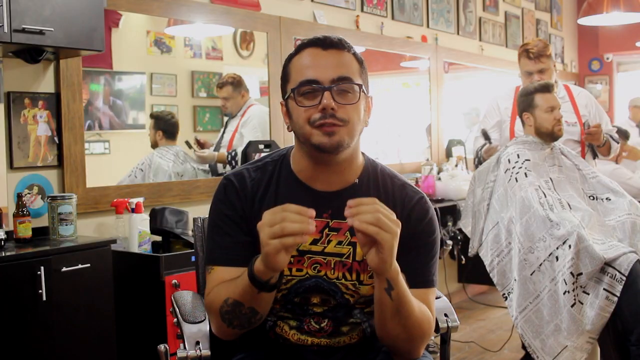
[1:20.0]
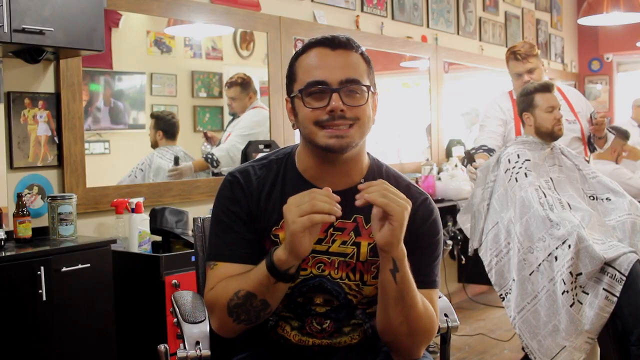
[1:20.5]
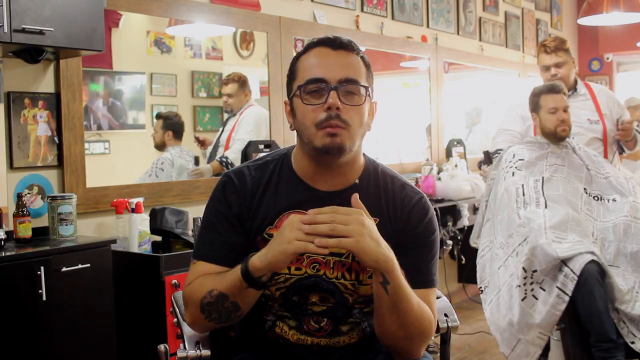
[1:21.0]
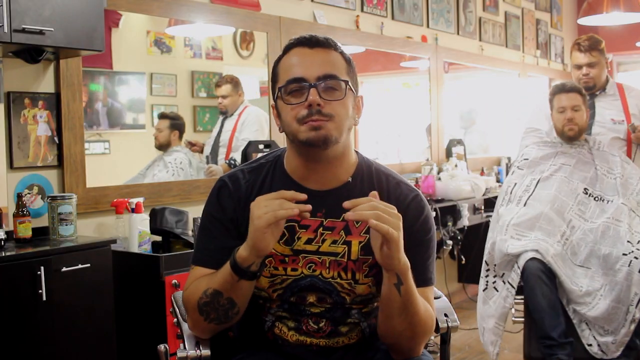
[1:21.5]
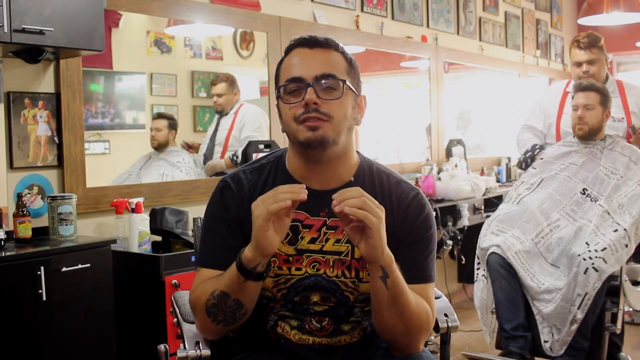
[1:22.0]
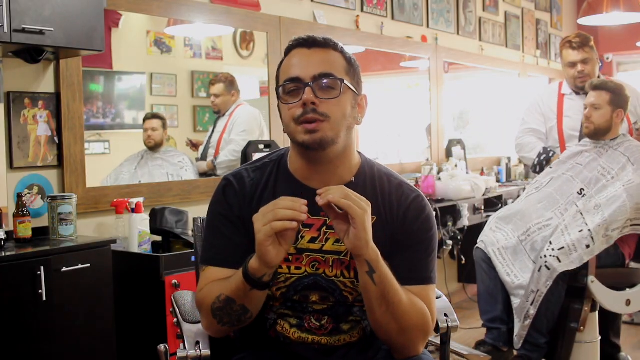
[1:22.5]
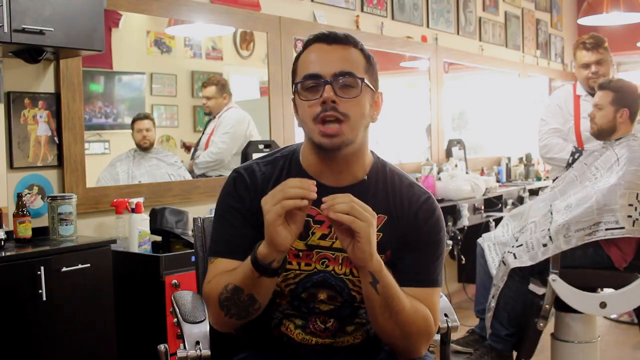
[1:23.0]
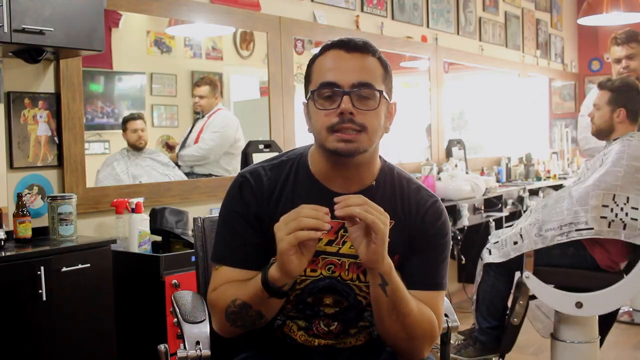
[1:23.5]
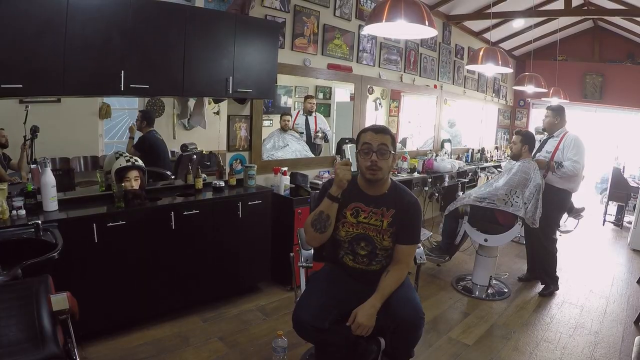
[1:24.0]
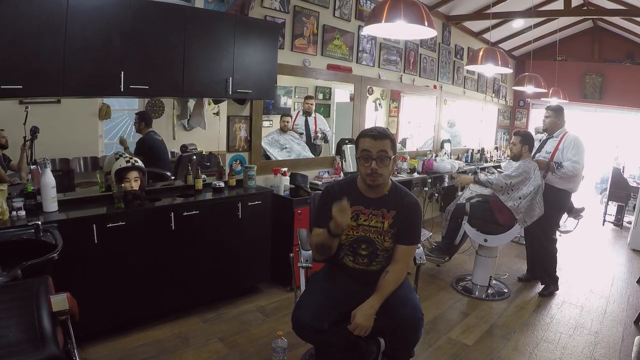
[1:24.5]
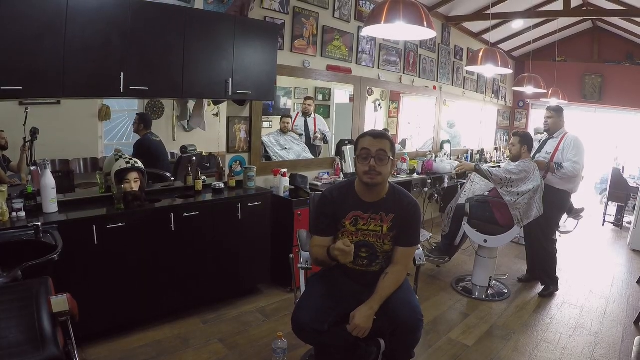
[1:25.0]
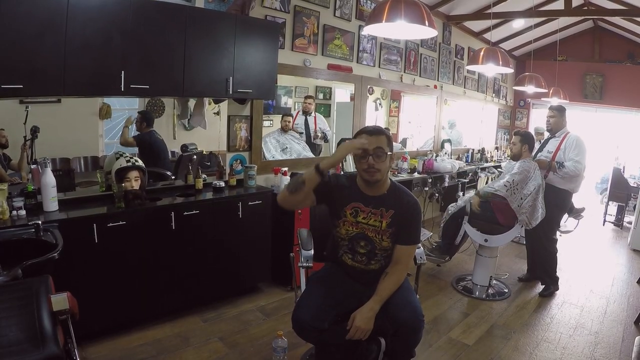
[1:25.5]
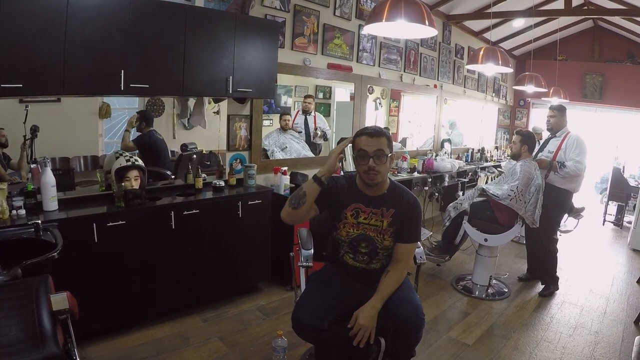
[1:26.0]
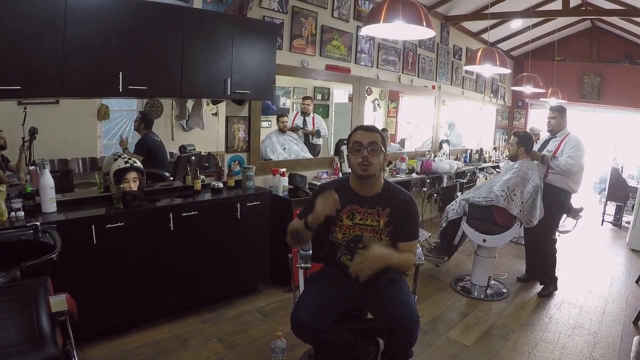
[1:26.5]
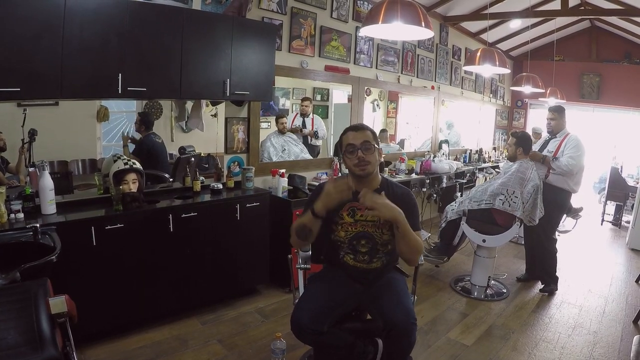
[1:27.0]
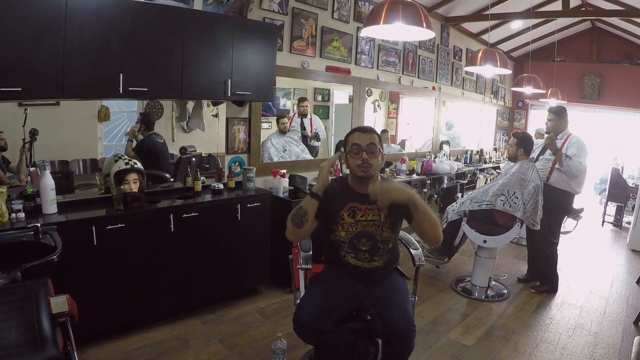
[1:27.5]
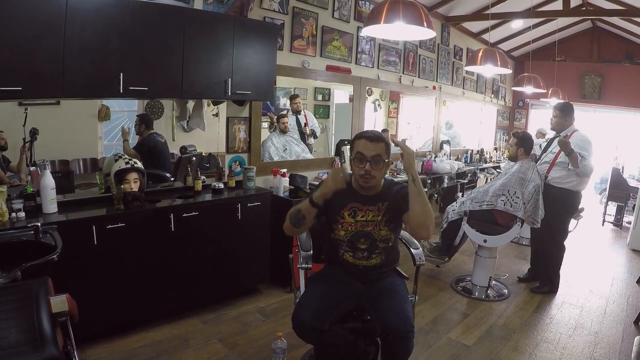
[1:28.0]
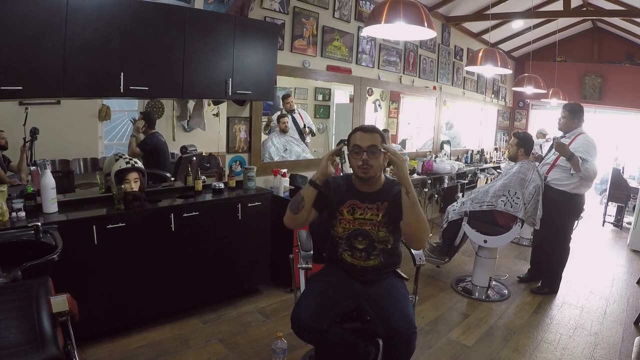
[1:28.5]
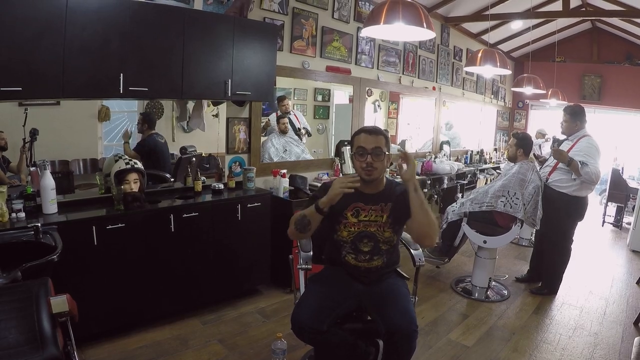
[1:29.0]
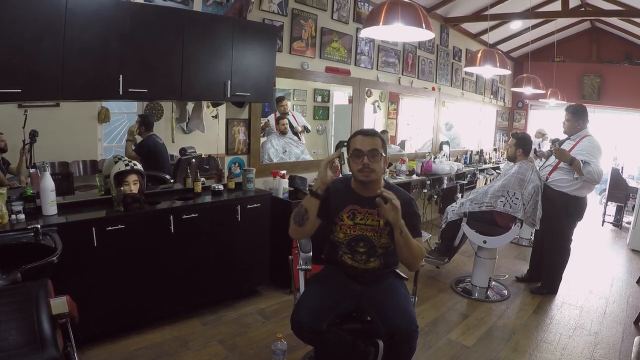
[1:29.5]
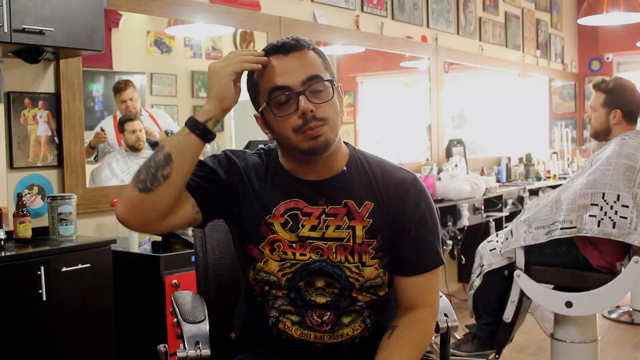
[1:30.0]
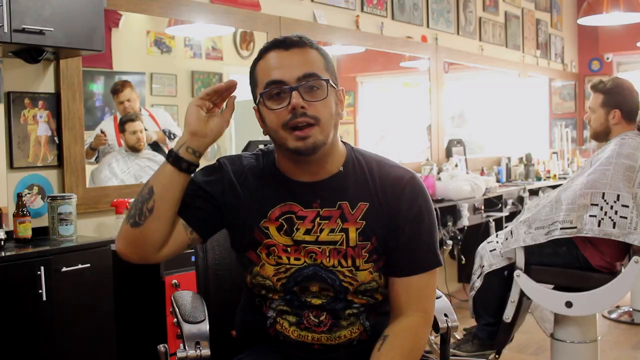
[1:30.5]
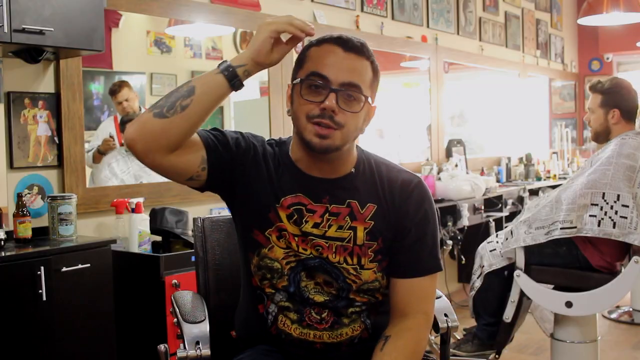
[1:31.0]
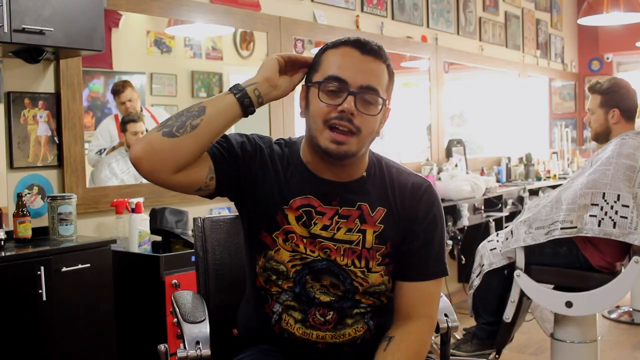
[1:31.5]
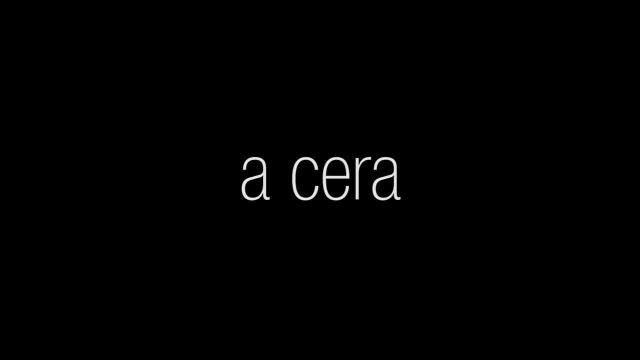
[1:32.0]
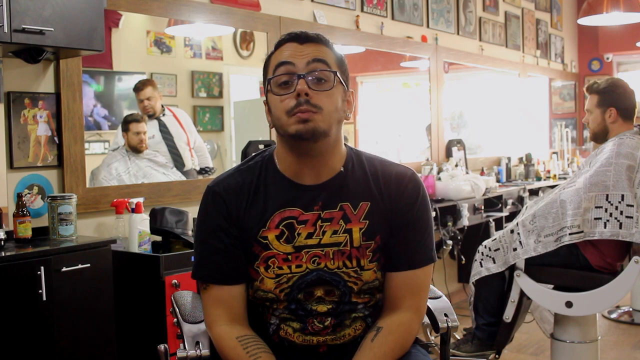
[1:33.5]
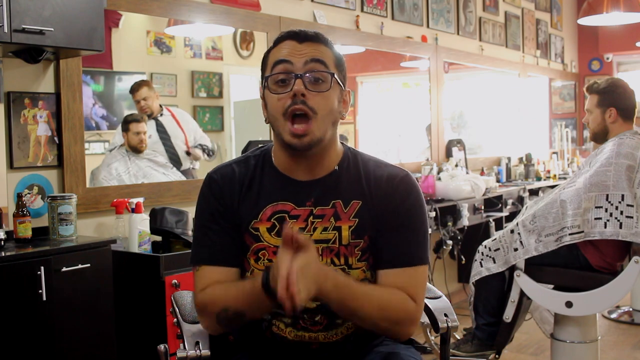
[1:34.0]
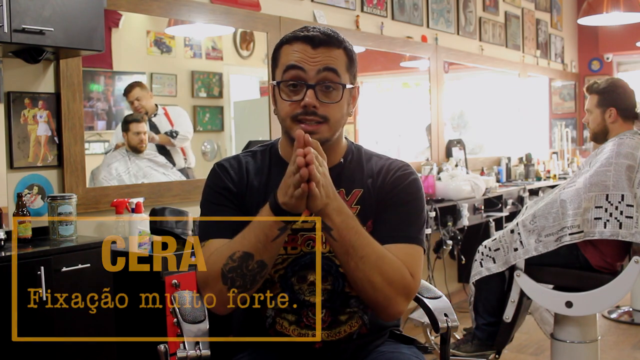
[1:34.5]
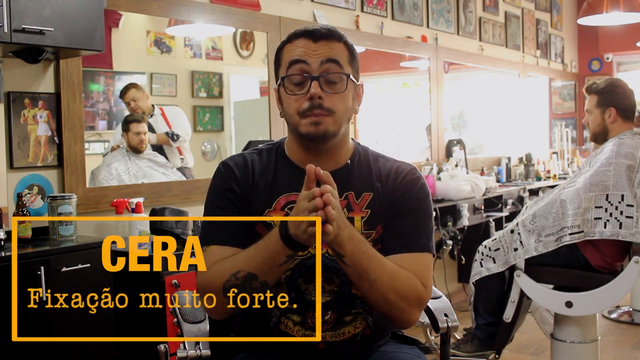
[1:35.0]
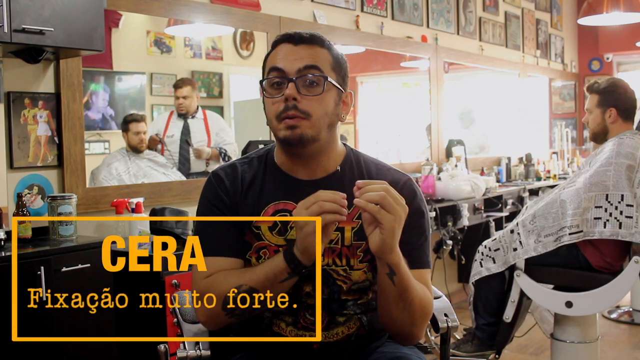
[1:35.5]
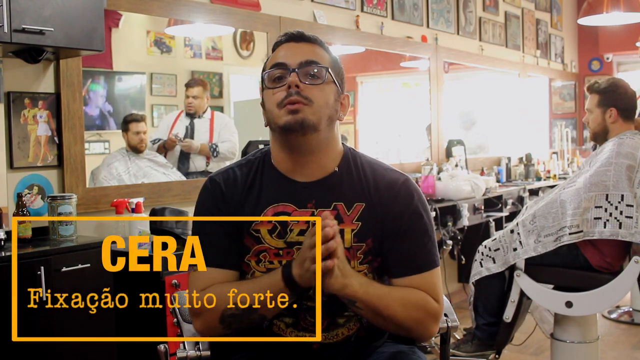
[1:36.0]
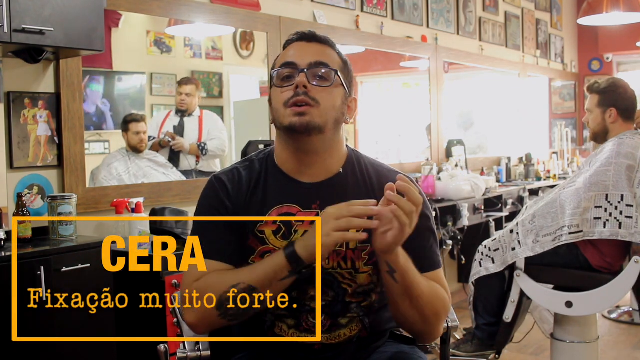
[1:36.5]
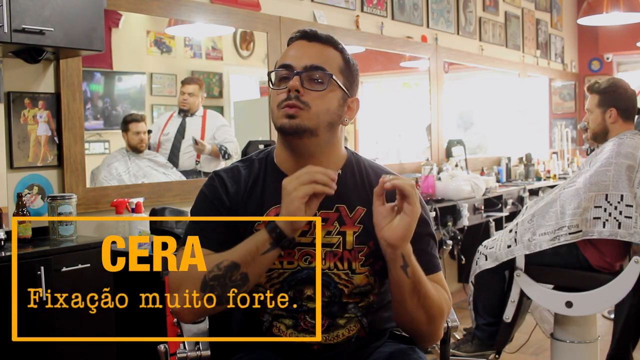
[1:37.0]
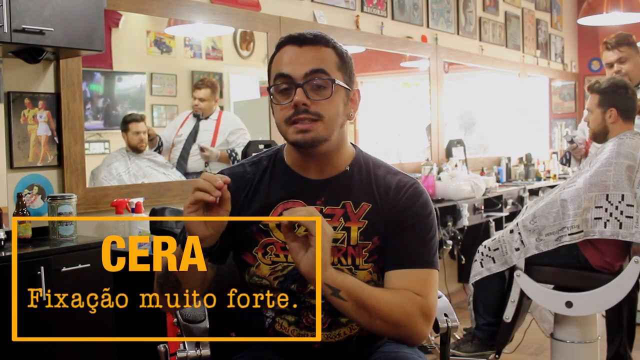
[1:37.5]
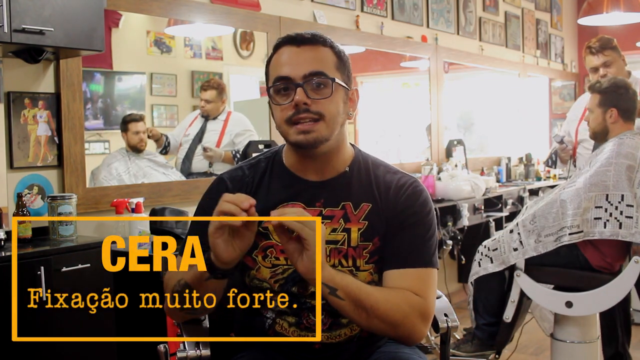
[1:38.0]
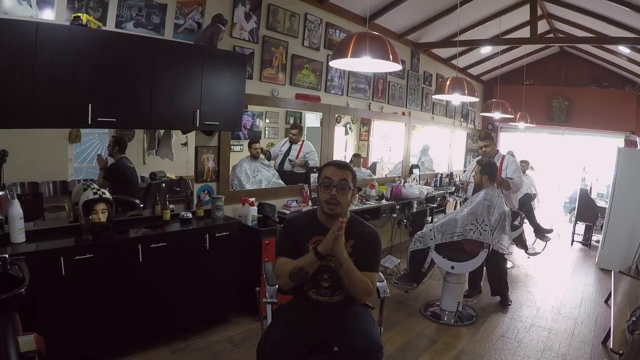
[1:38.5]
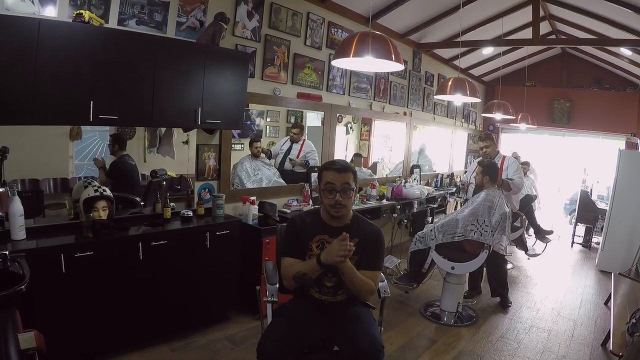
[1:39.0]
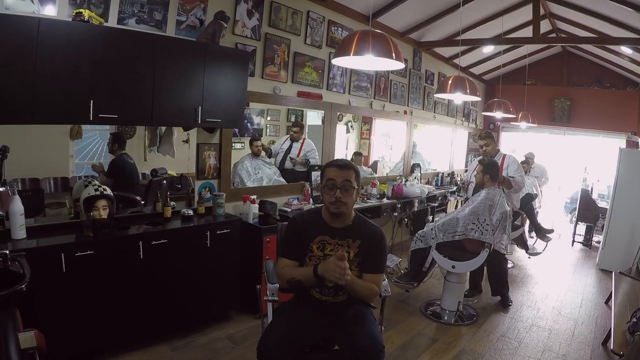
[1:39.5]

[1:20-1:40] A man is doing an interview, recording a video. He wears a black t-shirt with something written in yellow on the front that is hard to read, black trousers and glasses, has a watch on his hand, and has a tattoo on his hand. In the left corner something is written and highlighted in yellow. Behind him a big man is doing somebody's beard while the person lies on a bed. Brown cardboard is behind, and other people are there, including a lady in a red top and black trousers going to open the fridge. The walls have picture frames whose contents are too far away to make out. Other people are working in the same place, which looks like a salon.